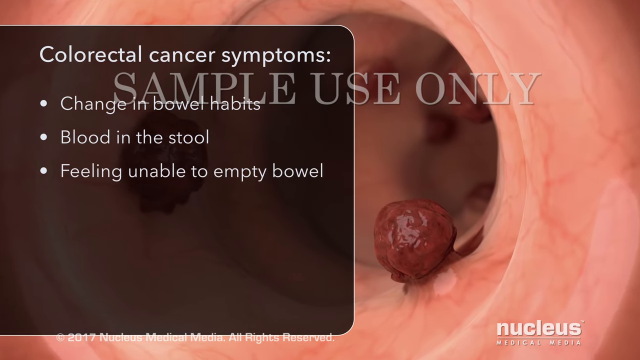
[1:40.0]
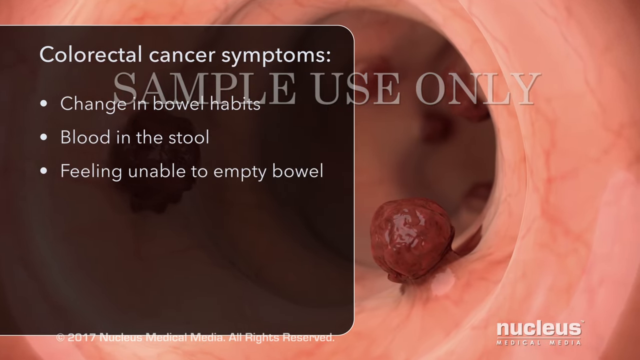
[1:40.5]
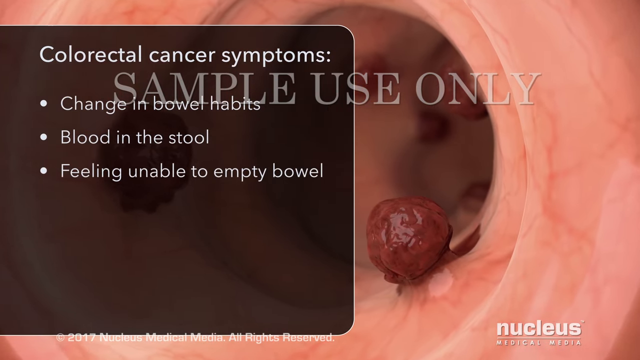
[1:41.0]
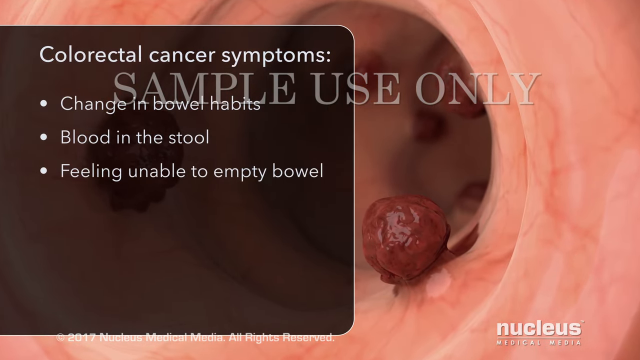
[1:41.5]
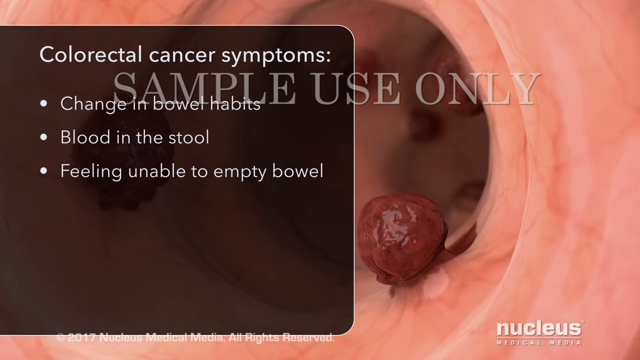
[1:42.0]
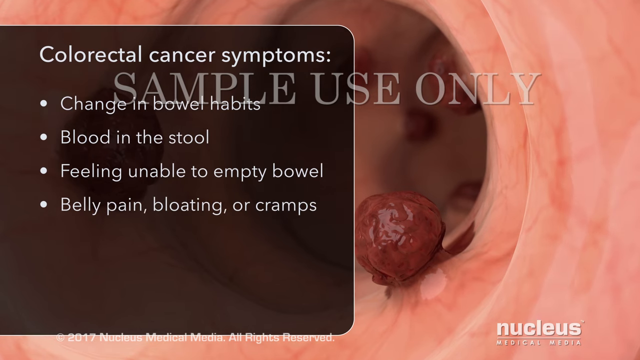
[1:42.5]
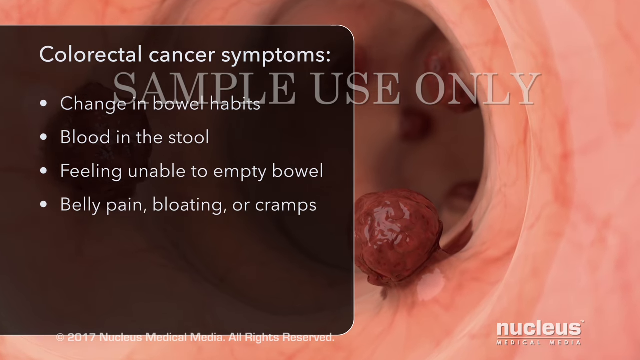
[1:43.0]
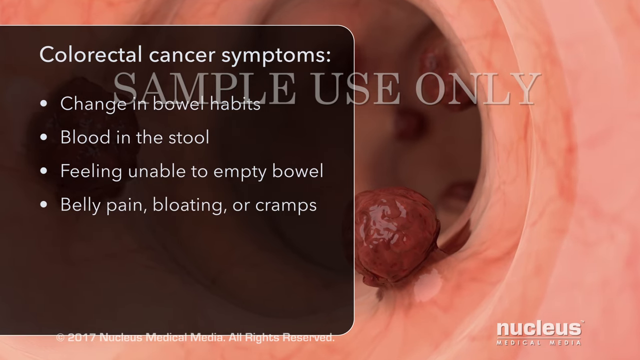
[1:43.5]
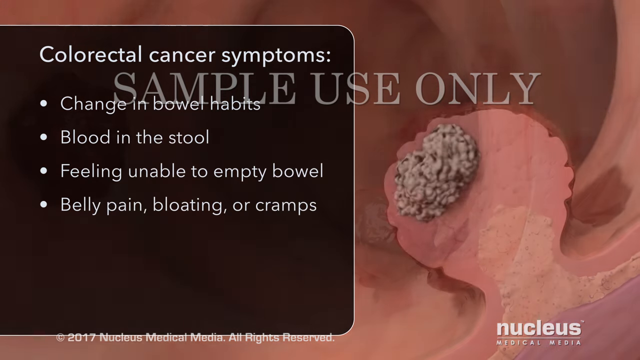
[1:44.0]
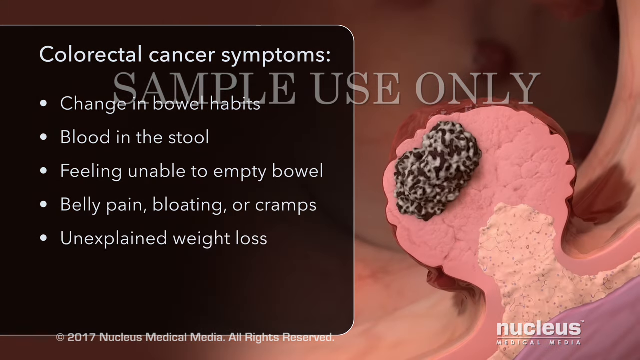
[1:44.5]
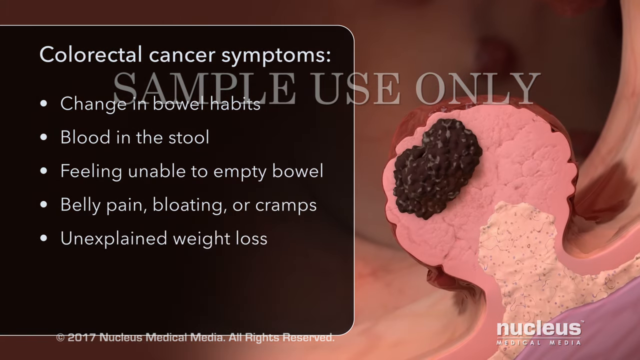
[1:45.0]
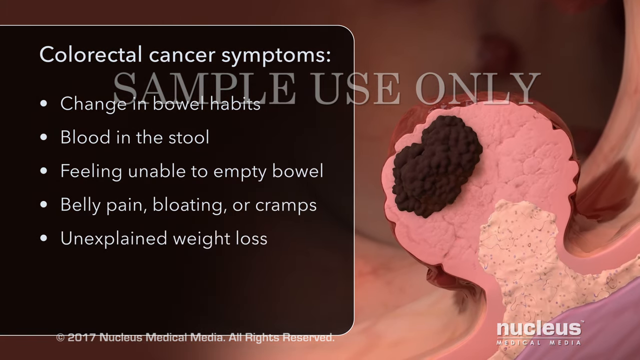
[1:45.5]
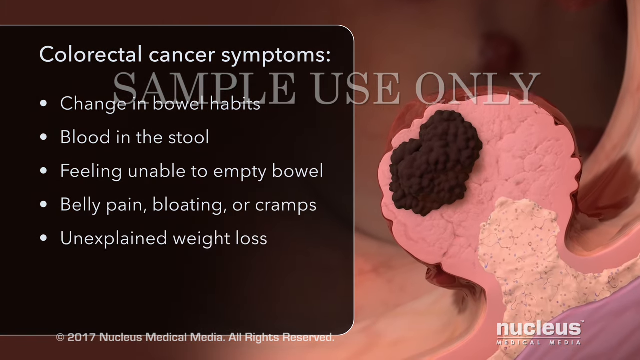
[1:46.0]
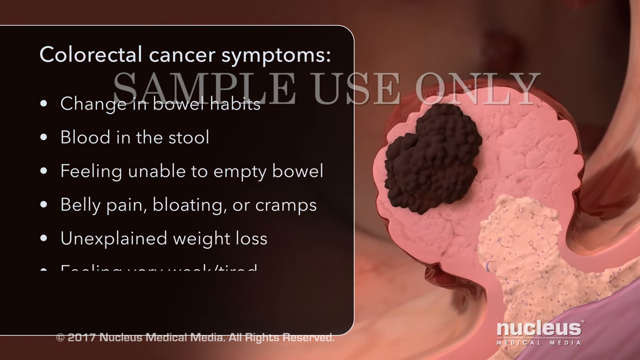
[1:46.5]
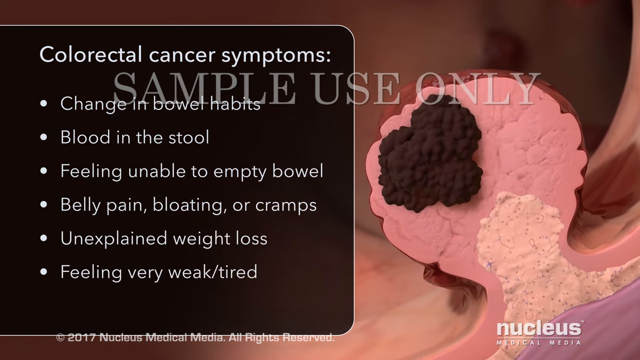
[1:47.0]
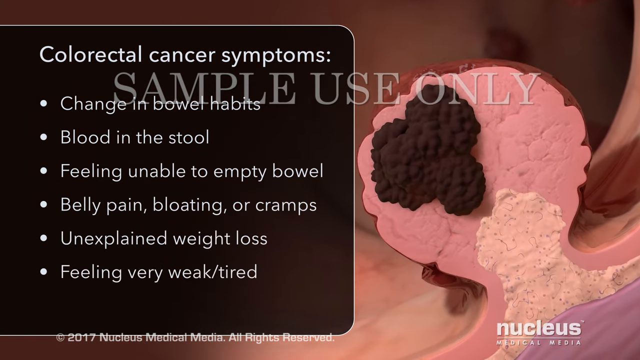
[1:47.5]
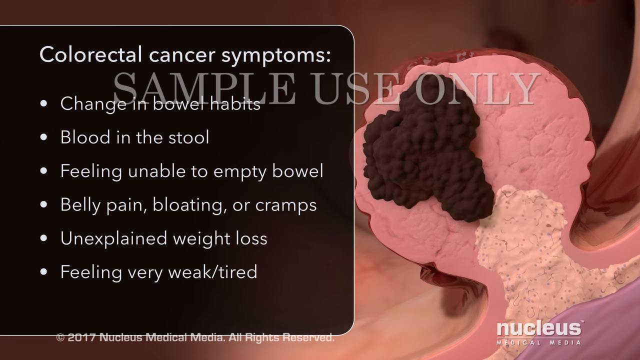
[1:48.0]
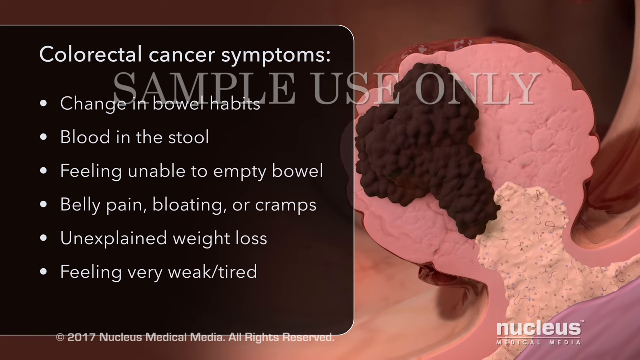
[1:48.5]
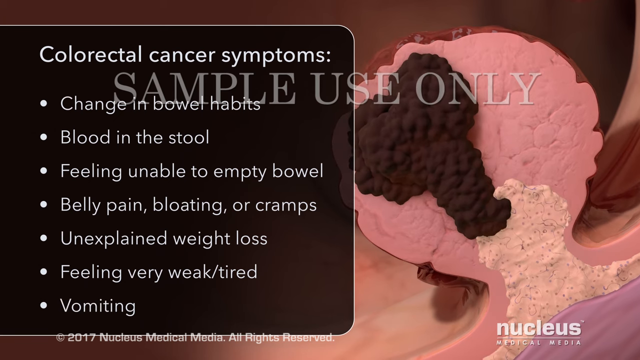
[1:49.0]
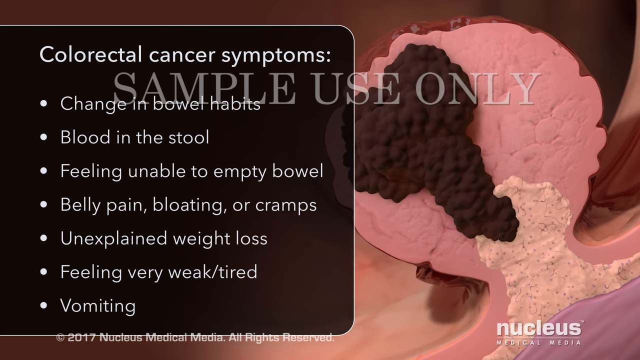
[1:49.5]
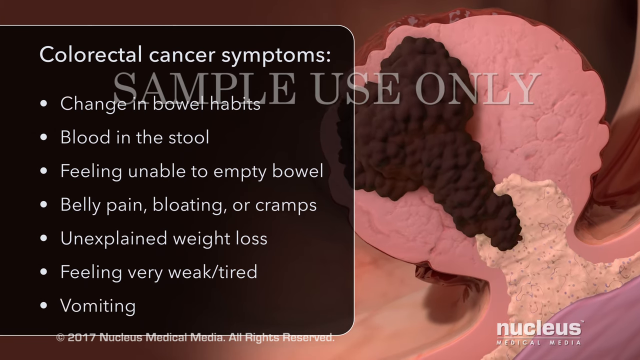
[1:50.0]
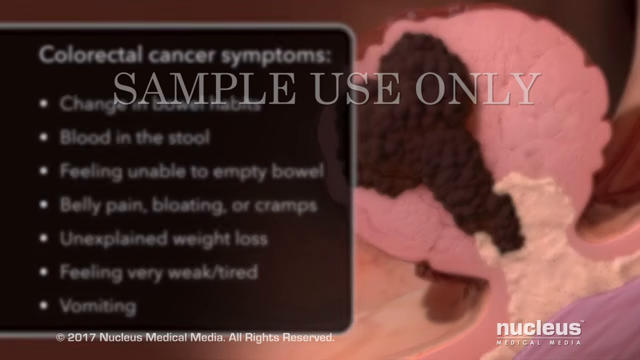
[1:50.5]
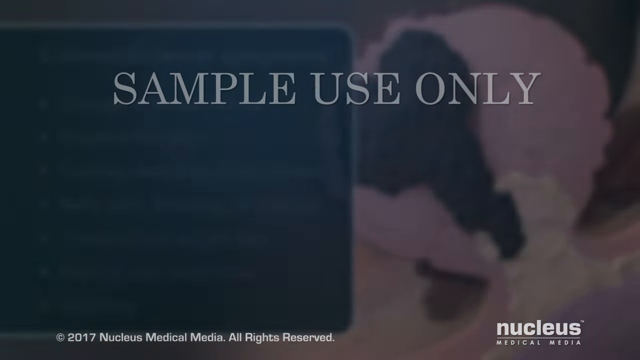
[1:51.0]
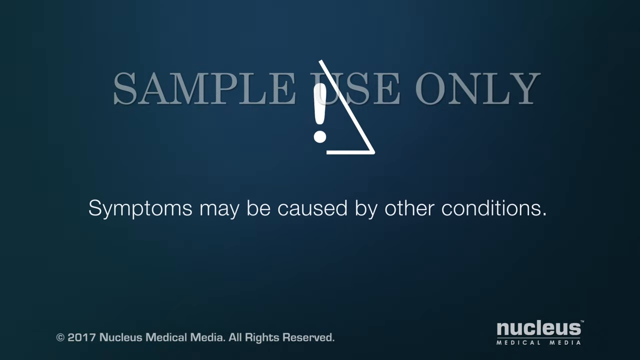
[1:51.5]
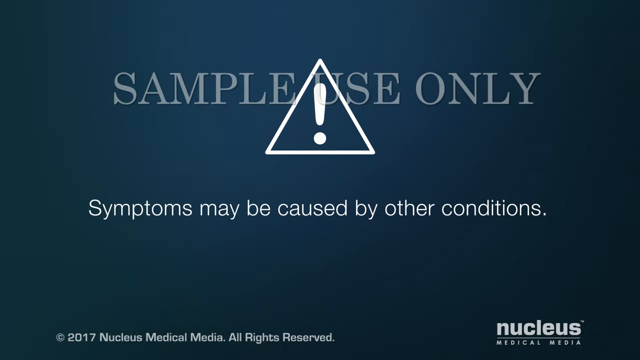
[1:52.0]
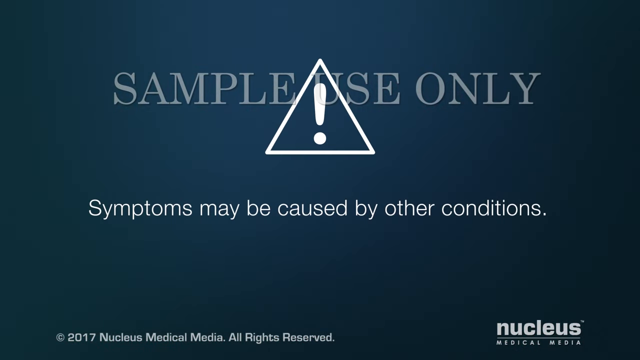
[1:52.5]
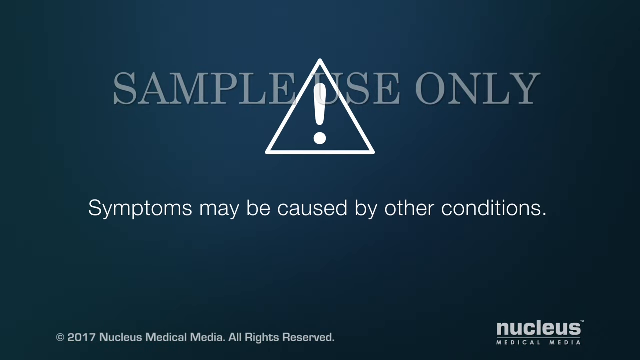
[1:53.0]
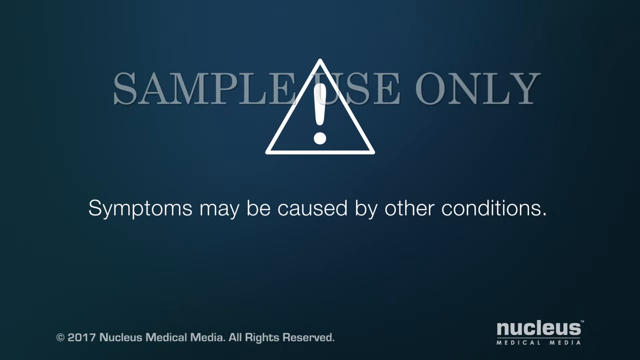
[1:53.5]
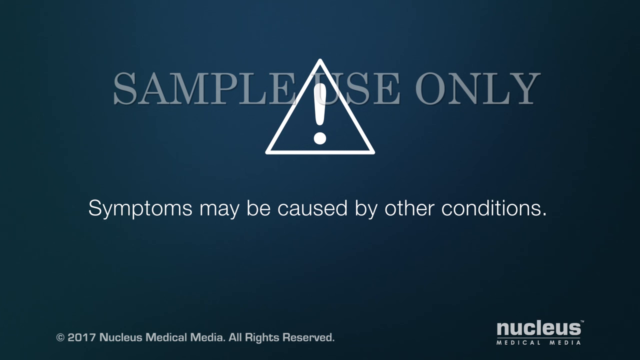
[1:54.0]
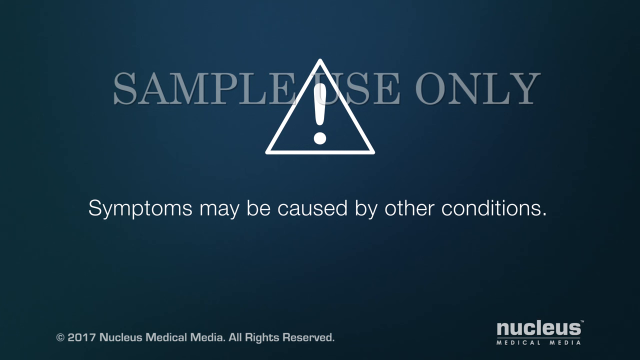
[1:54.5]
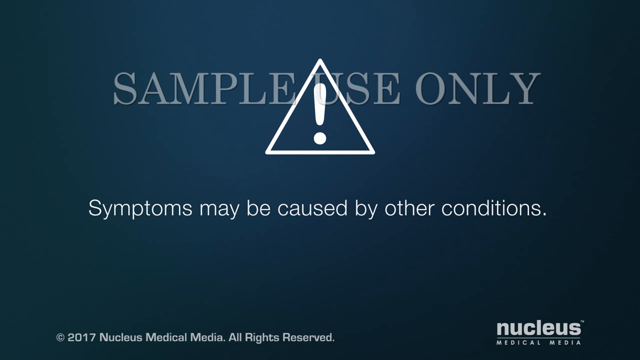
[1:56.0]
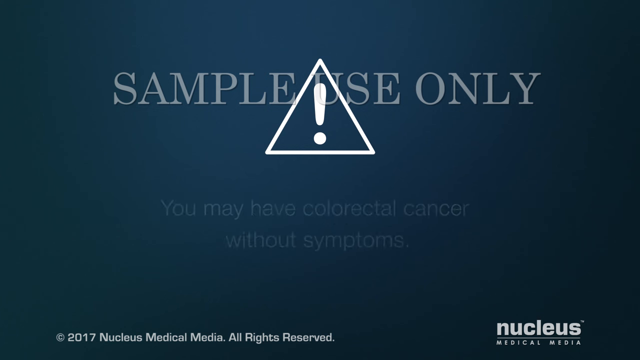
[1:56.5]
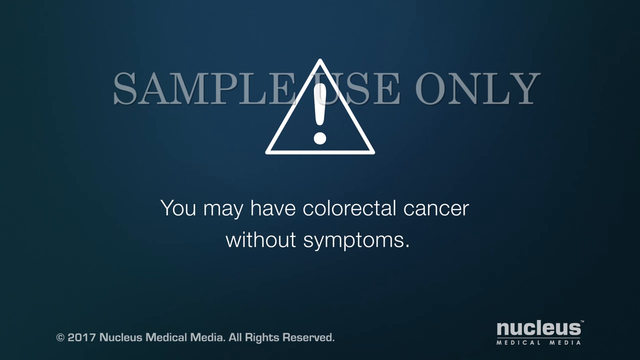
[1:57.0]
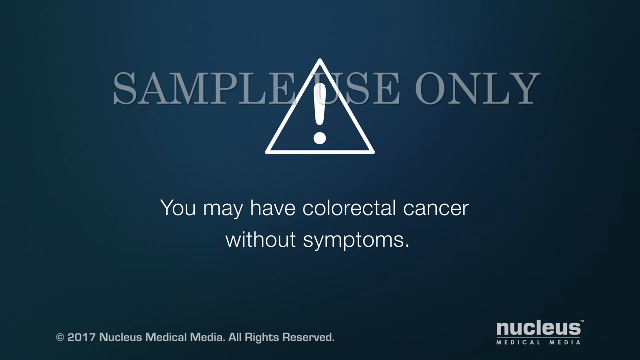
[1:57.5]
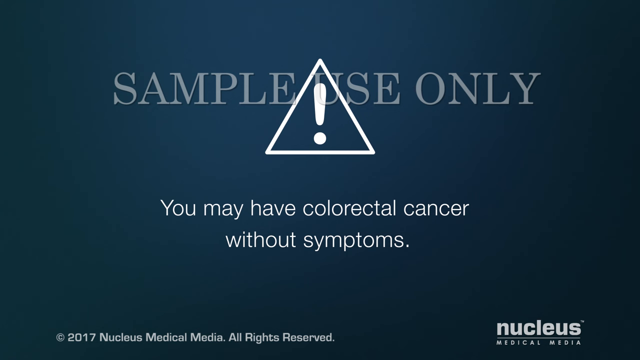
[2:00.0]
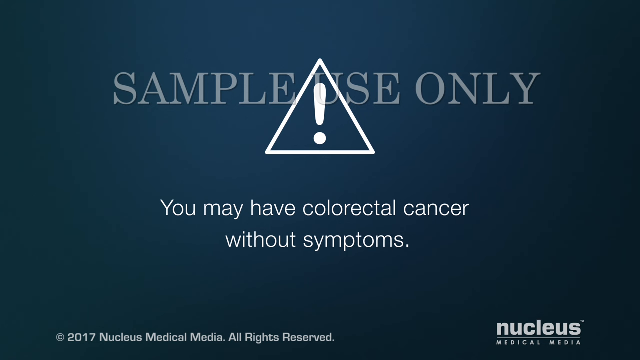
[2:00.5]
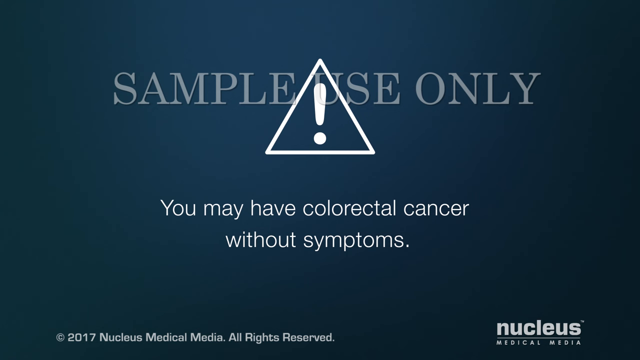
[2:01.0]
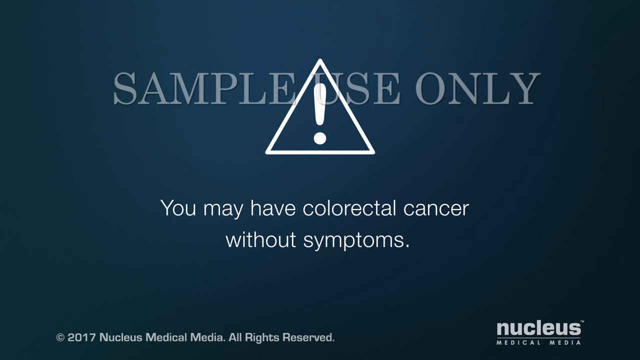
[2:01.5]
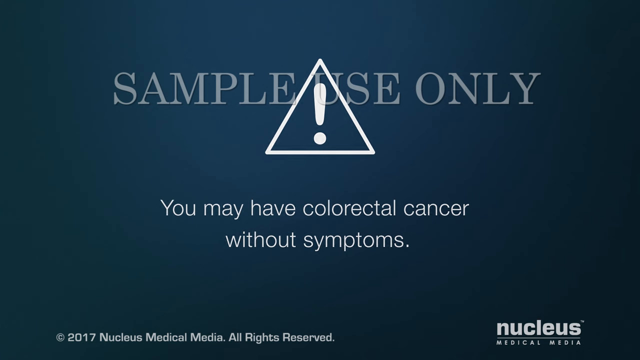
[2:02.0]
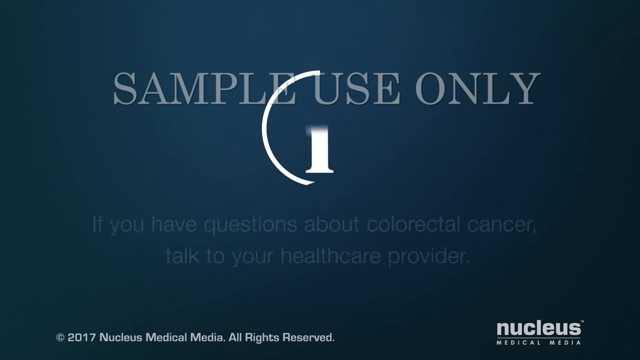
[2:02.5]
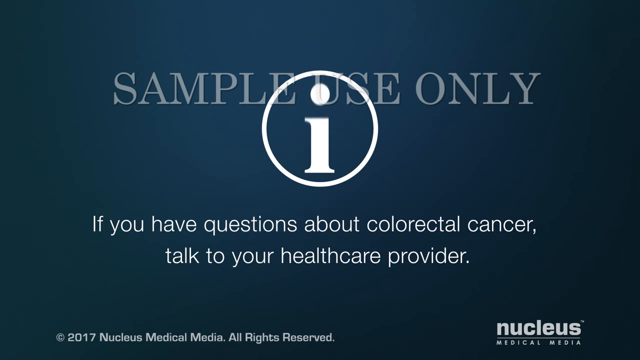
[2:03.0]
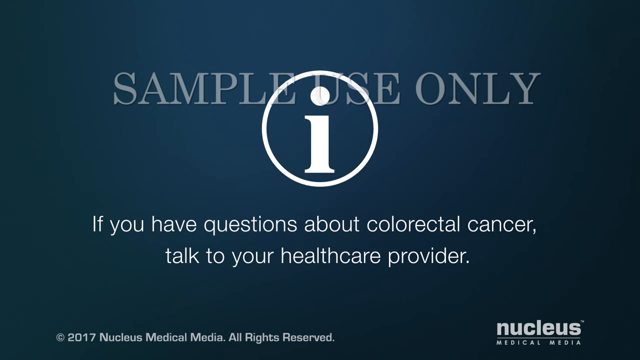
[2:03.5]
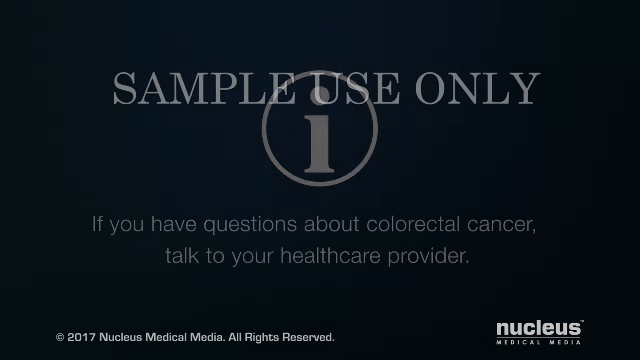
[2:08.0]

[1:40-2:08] The background is zoomed in on the anal canal and the polyps. A darker, square-shaped pop-up outlined in white appears toward the left side, with white text reading "colorectal cancer symptoms." A bulleted list pops up: "change in bowel habits," "blood in the stool," "feeling unable to empty bowel," "belly pain, bloating, or cramps," "unexplained weight loss," "feeling very weak/tired," "vomiting." A big white exclamation mark in a triangle then pops up on a navy title card that is darker at the edges and reads "sample use only." Beneath it, in white, the text reads "symptoms may be caused by other conditions," then "you may have colorectal cancer without symptoms," and then "if you have questions about colorectal cancer, talk to your health care provider." There is an I within a circle.